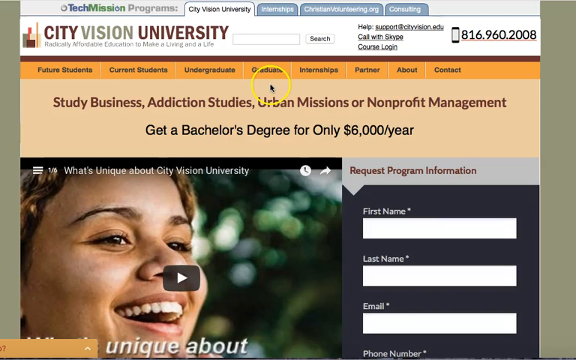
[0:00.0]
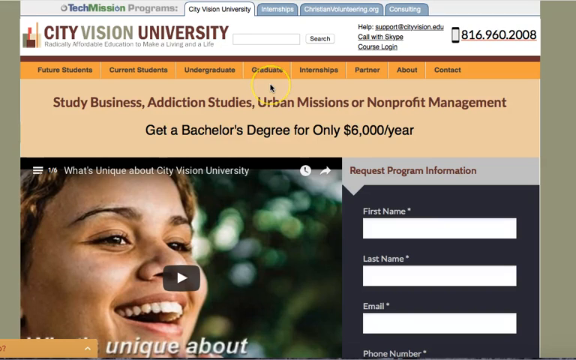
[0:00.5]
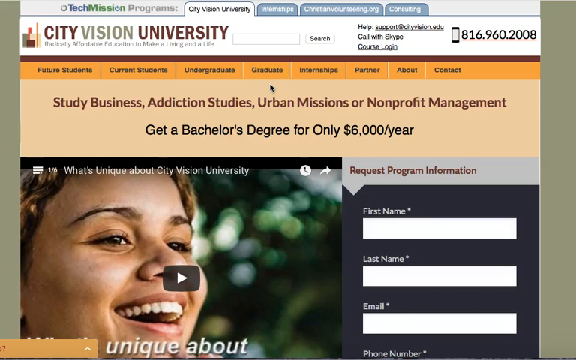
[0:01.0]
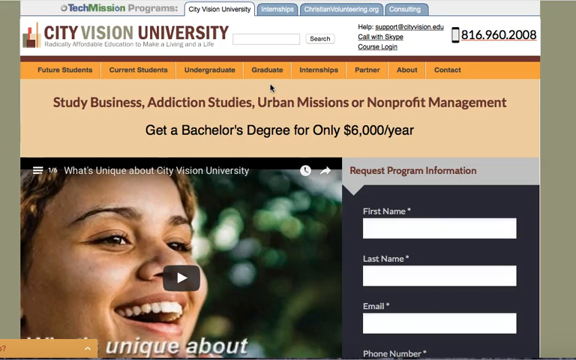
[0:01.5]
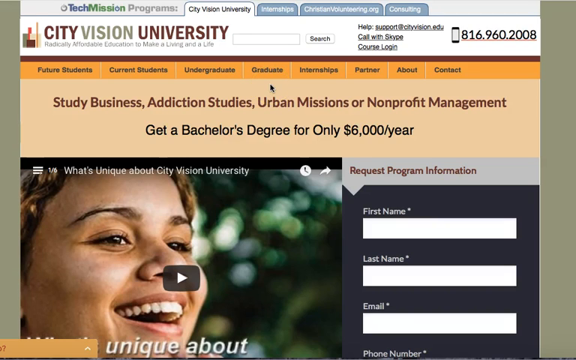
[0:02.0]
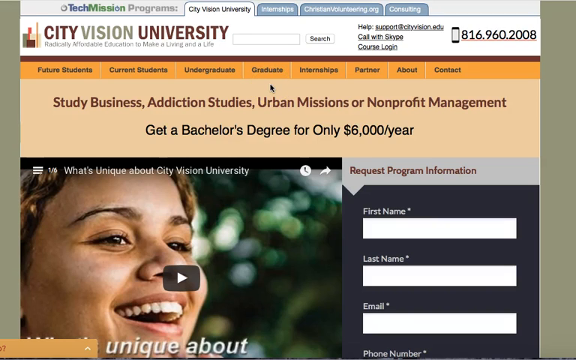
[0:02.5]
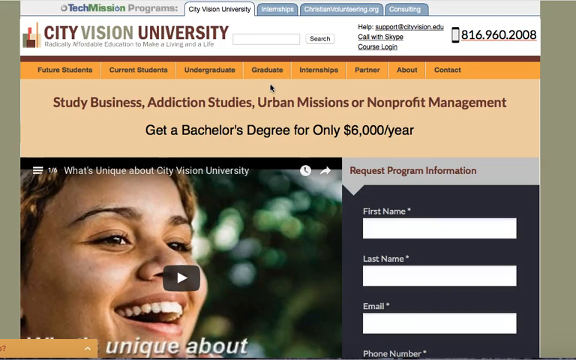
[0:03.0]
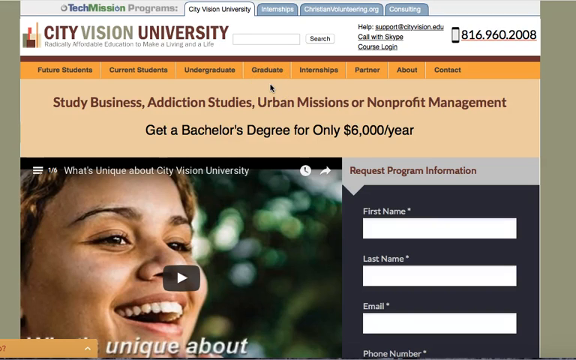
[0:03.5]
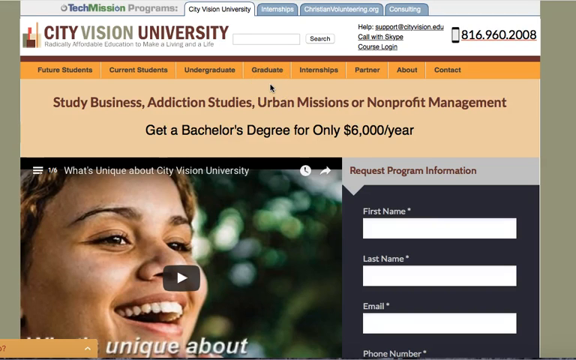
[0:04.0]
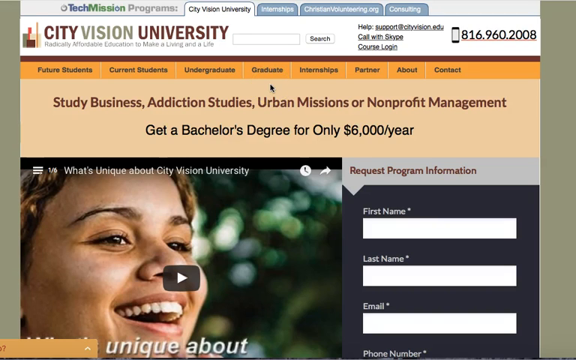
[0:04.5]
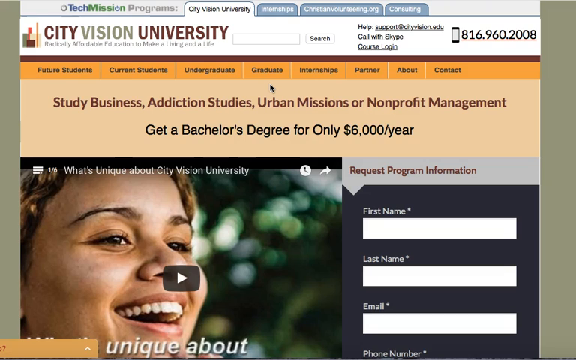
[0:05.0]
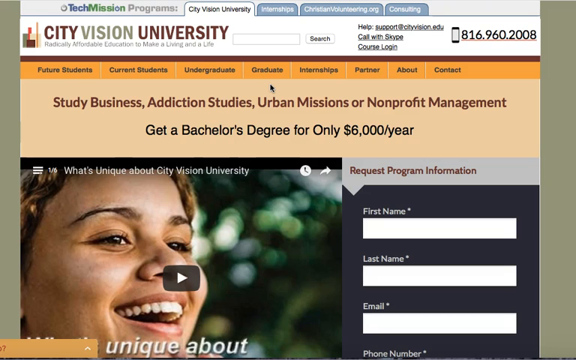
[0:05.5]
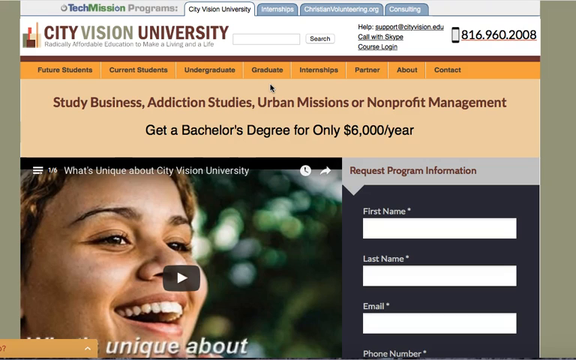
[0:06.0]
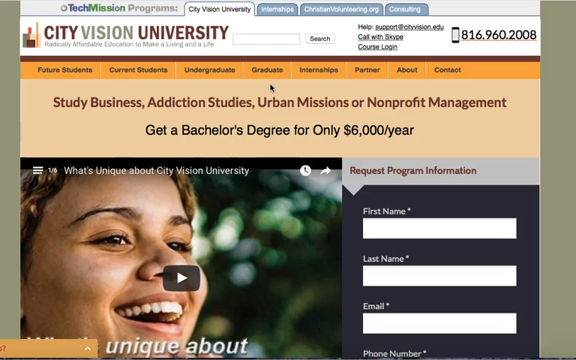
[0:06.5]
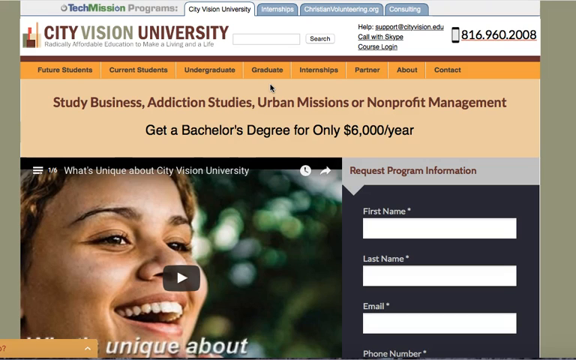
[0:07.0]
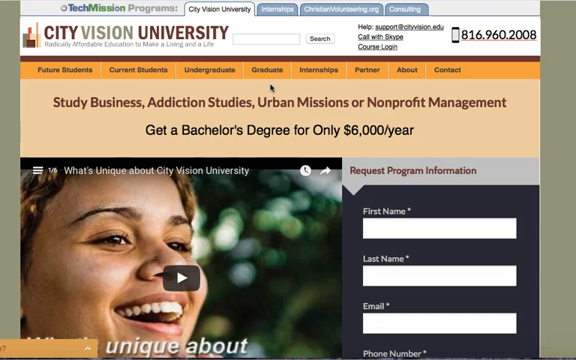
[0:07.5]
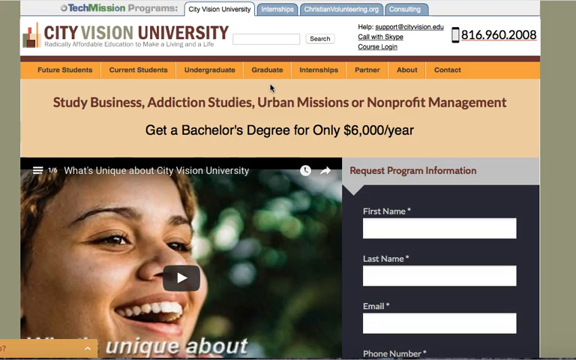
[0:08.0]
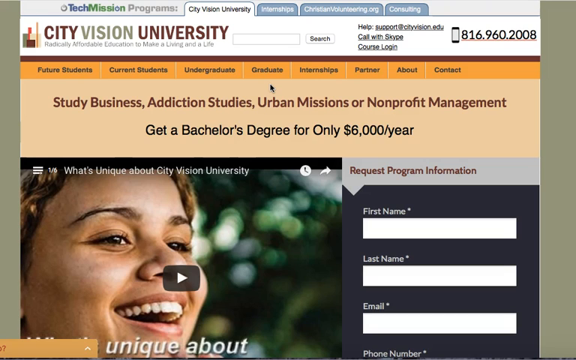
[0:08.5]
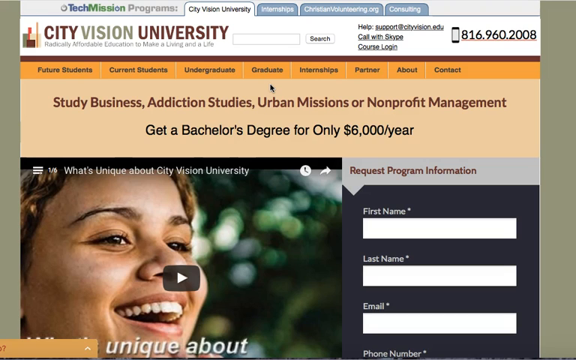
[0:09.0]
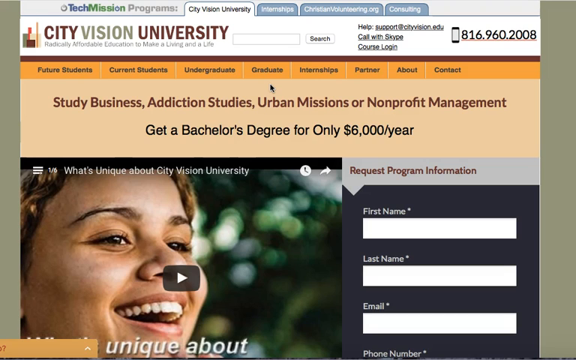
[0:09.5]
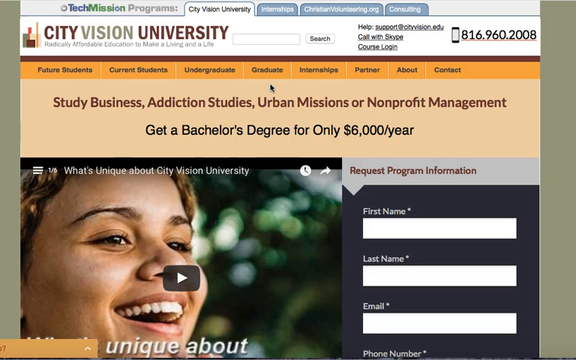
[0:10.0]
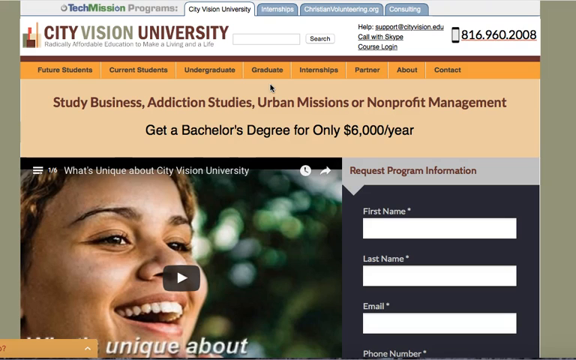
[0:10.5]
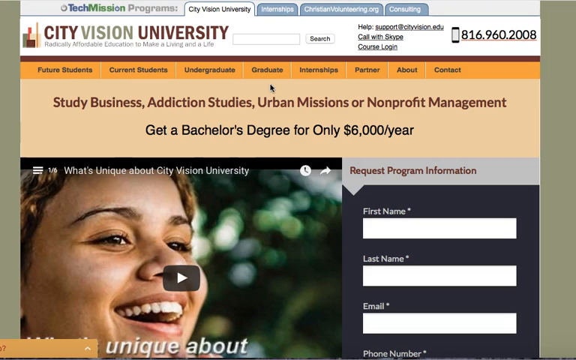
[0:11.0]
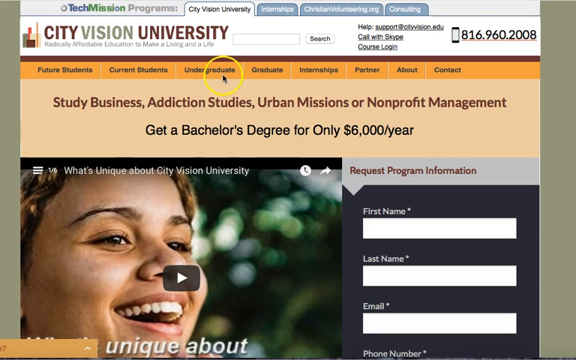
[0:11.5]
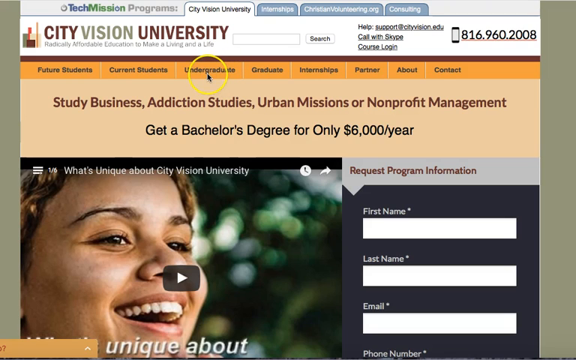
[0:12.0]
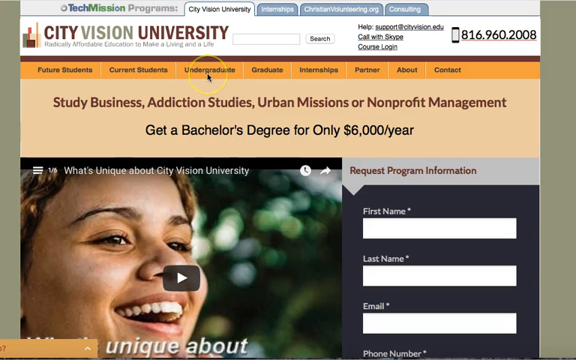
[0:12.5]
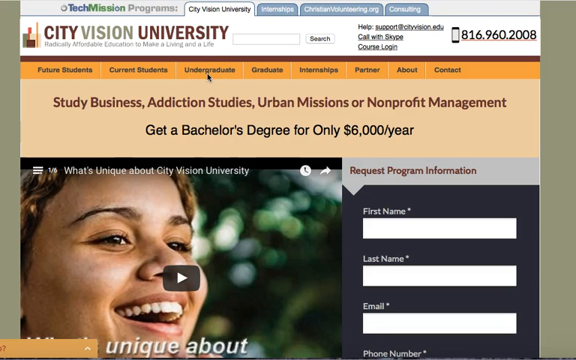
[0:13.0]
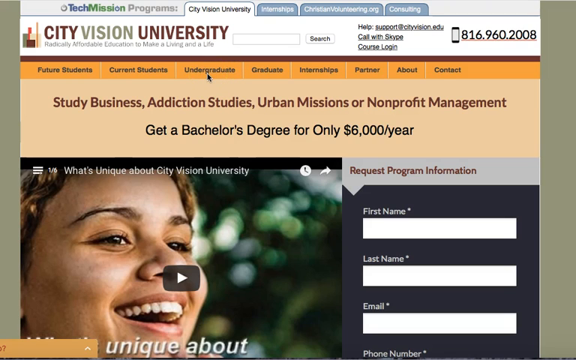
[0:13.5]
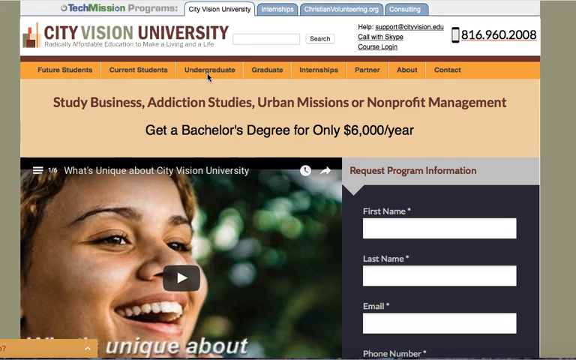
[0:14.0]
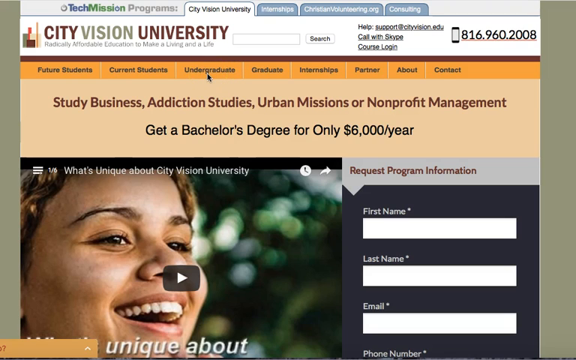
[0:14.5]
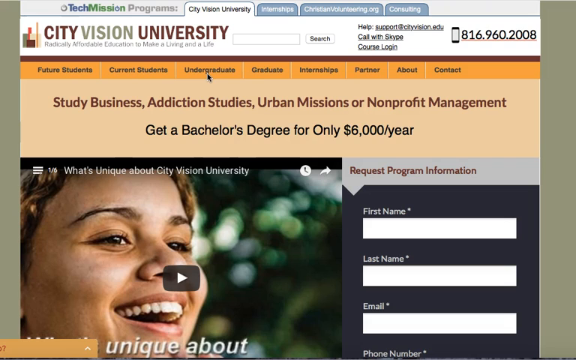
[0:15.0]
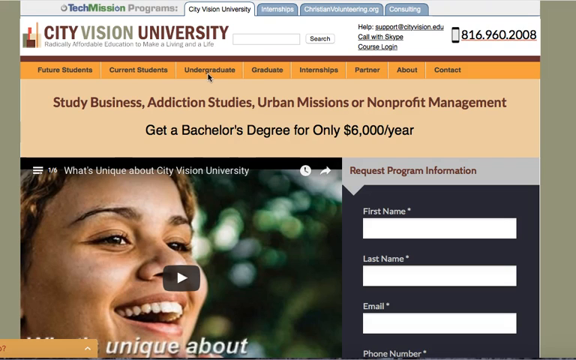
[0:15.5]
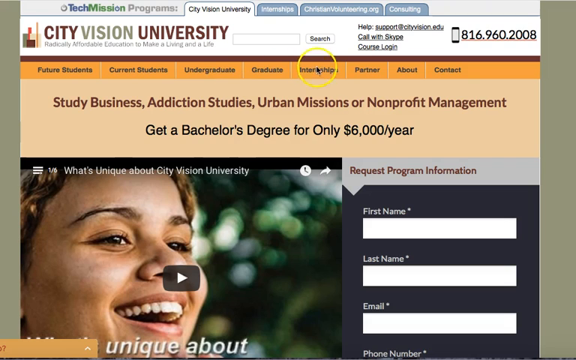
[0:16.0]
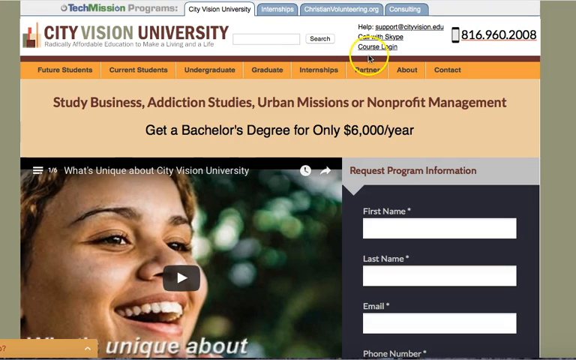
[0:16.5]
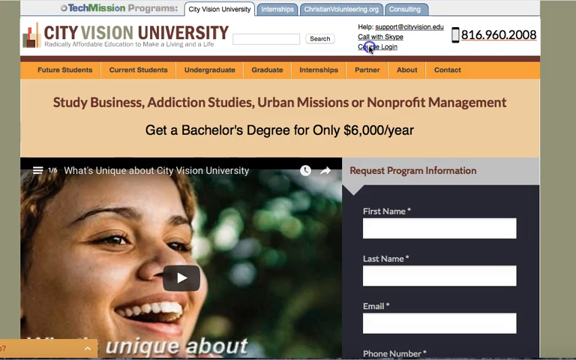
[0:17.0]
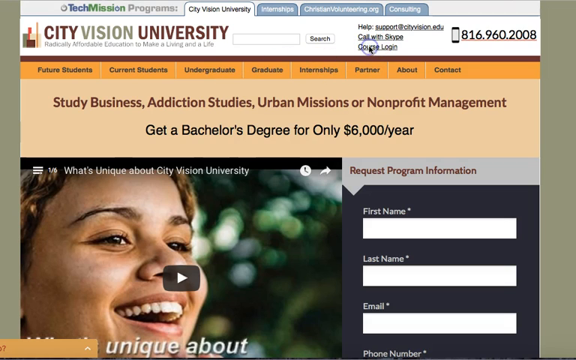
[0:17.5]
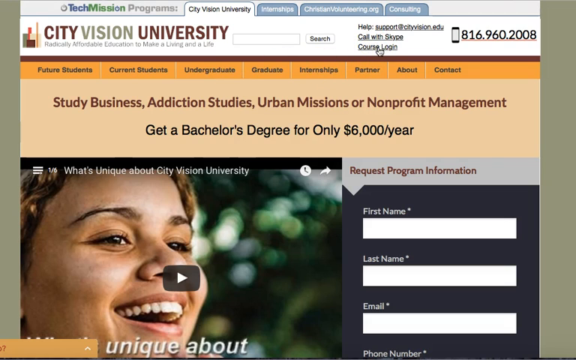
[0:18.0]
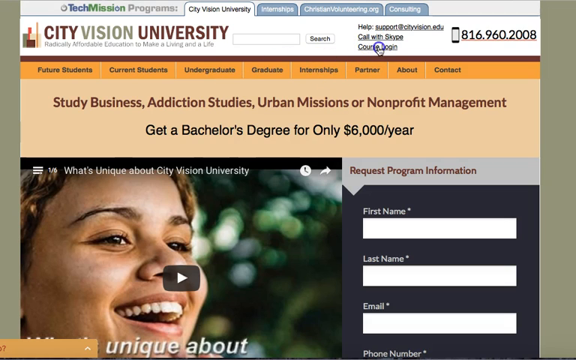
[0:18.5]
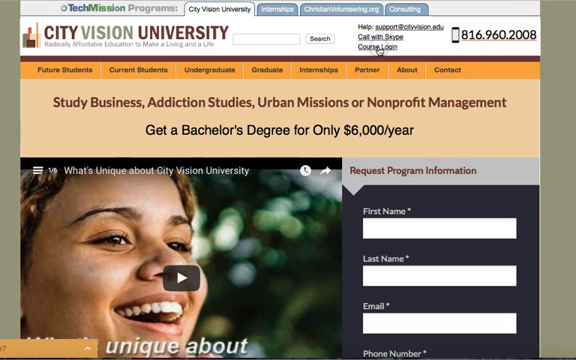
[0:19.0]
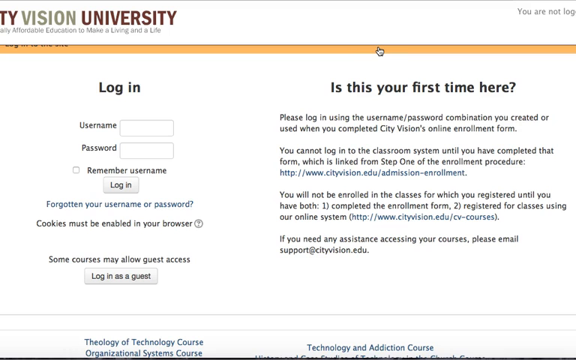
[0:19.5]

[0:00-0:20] The video appears to be a tutorial for logging into or picking courses on the website of City Vision University, apparently an online university or the online component of one. It opens on the site's home screen, which lists information such as study business, addiction studies, urban missions, and non-profit management; it might be a Christian website or university. A yellow circle surrounds the mouse cursor, which stays very still for roughly the first ten seconds. The mouse then starts to move, the yellow circle highlighting where it is. It first goes to the undergraduate item, then over to "course login" and clicks on it. This brings up the course login page, a white page with text on it: username, password, links for a forgotten username or password, and a message on the side asking "is this your first time here?" with instructions on what to do.